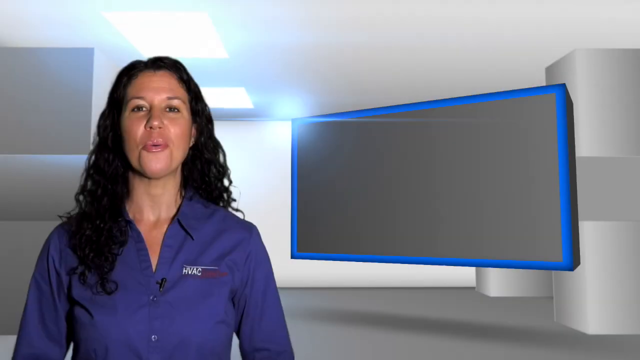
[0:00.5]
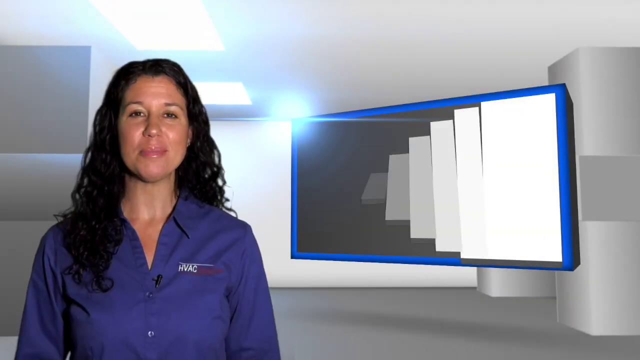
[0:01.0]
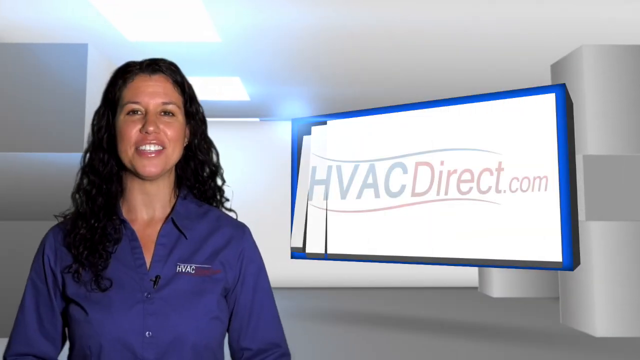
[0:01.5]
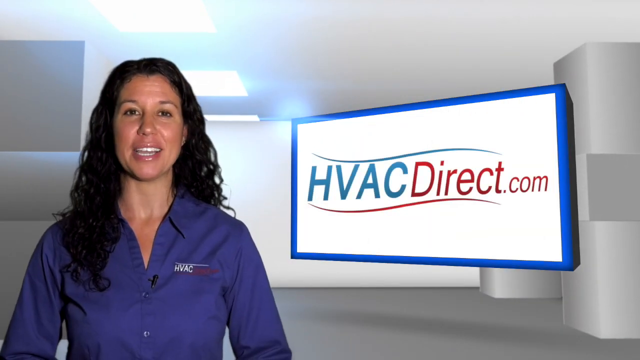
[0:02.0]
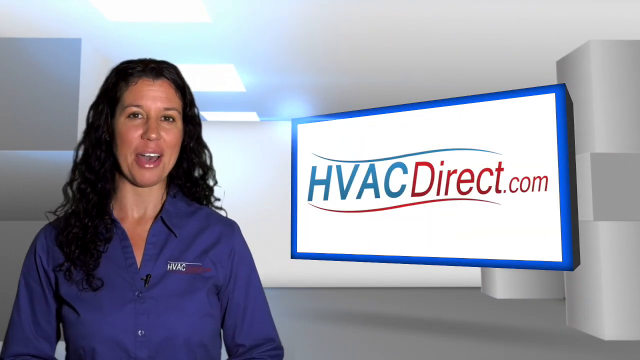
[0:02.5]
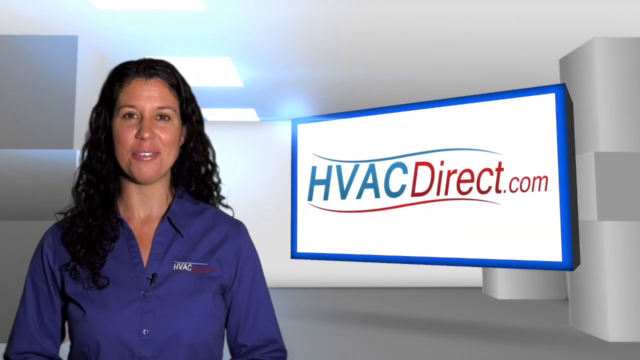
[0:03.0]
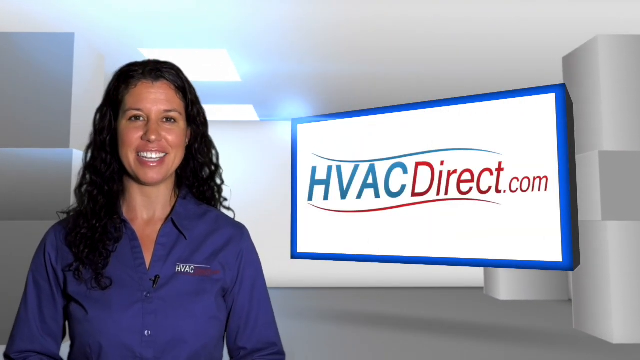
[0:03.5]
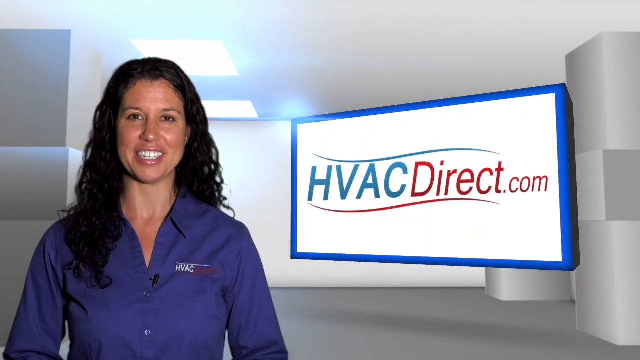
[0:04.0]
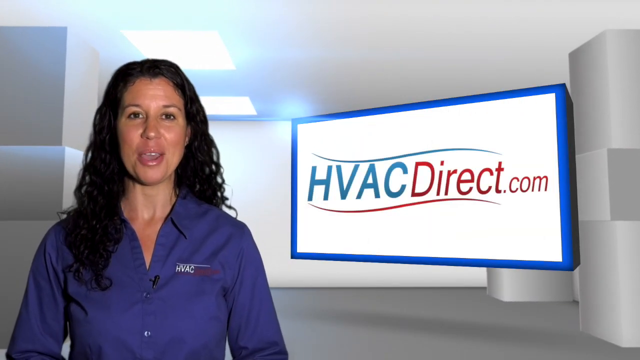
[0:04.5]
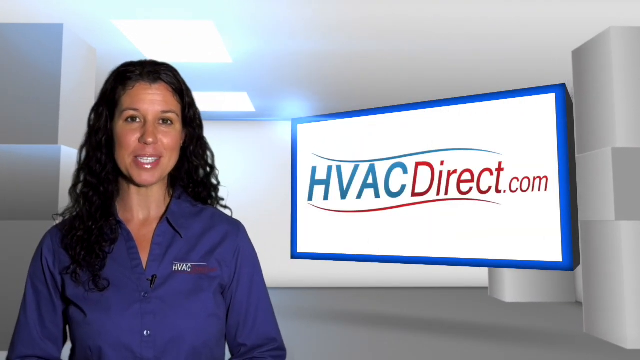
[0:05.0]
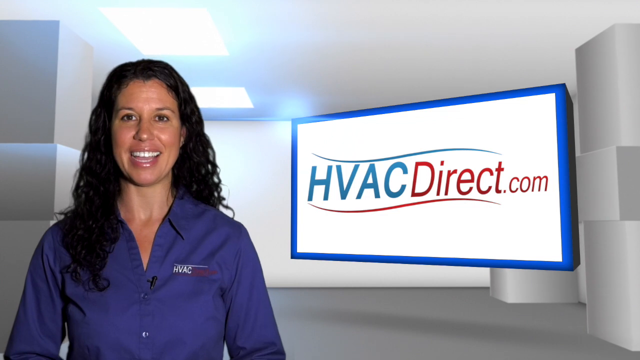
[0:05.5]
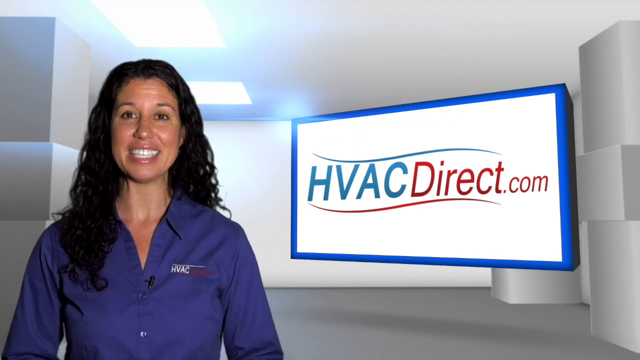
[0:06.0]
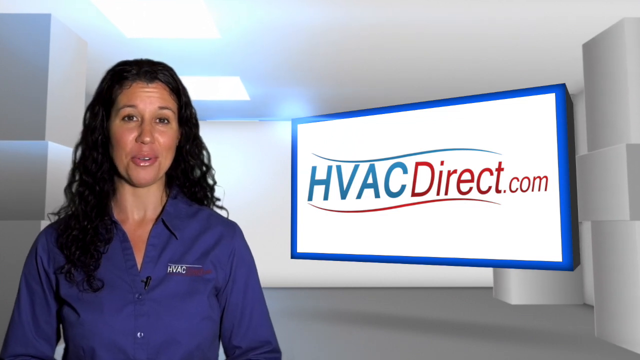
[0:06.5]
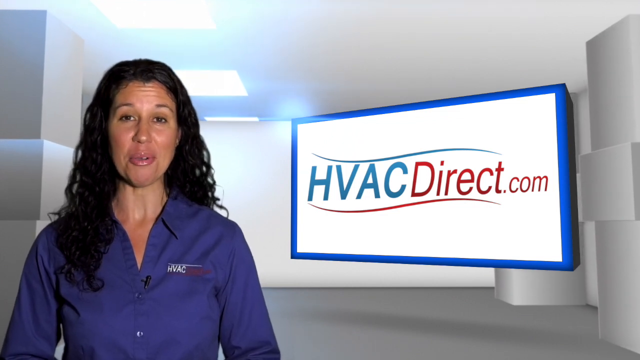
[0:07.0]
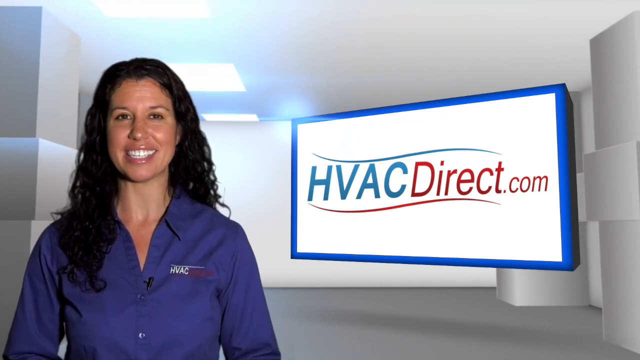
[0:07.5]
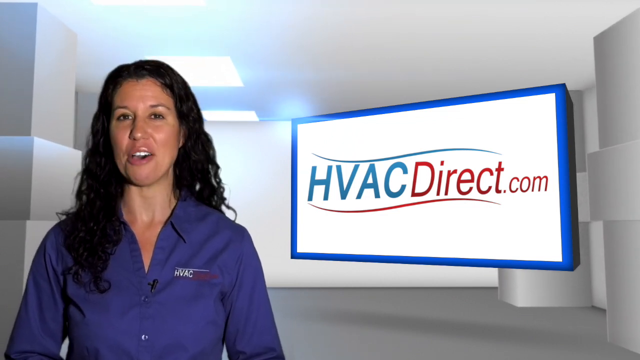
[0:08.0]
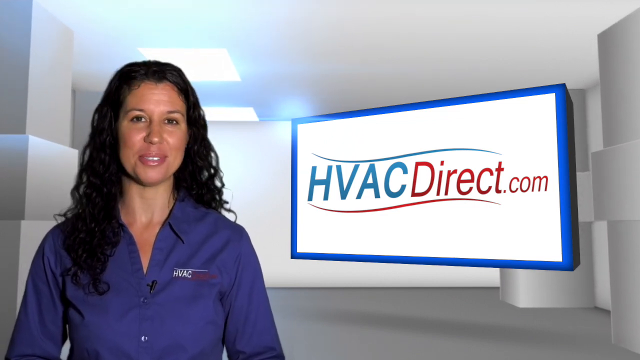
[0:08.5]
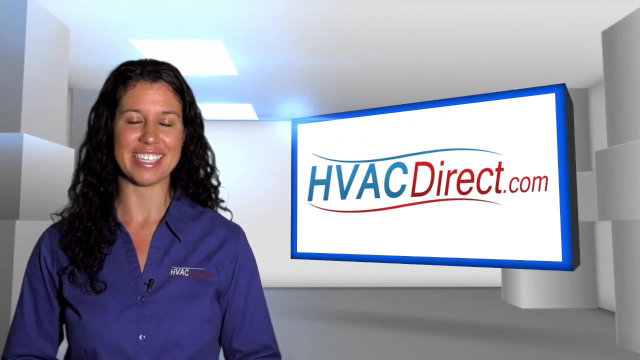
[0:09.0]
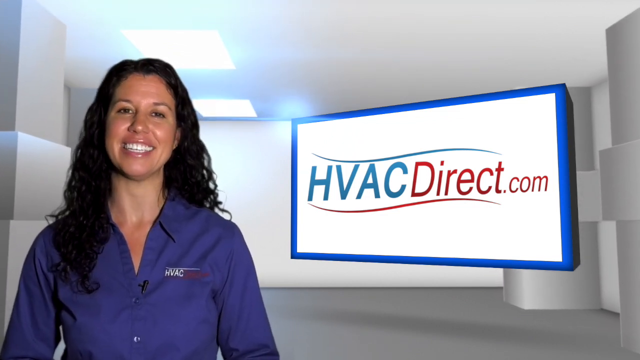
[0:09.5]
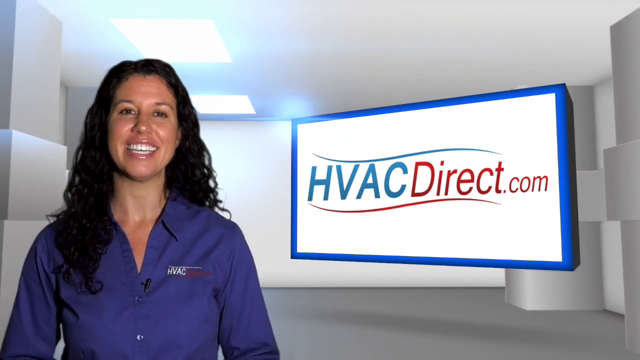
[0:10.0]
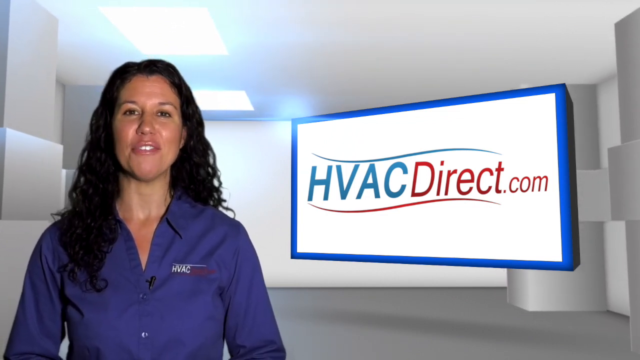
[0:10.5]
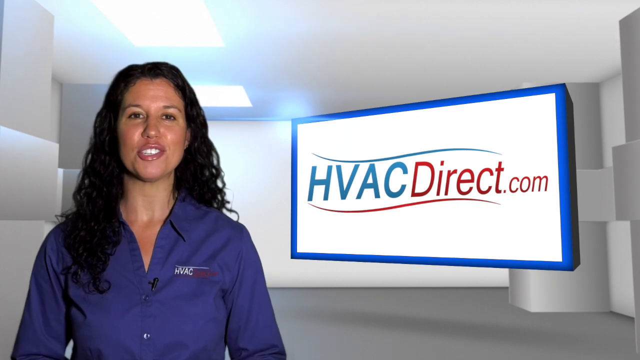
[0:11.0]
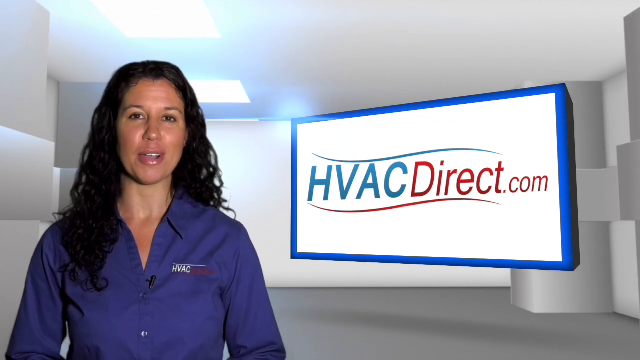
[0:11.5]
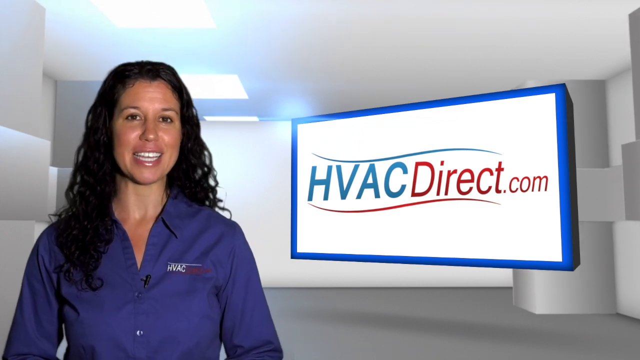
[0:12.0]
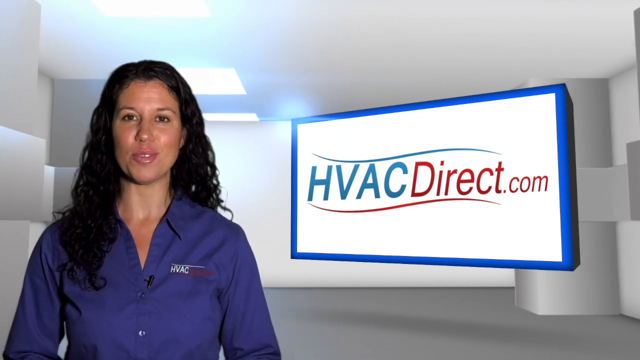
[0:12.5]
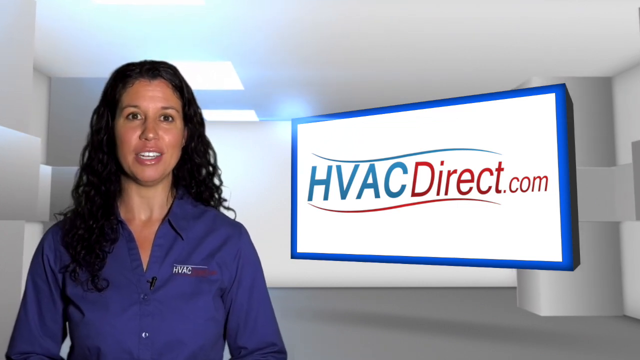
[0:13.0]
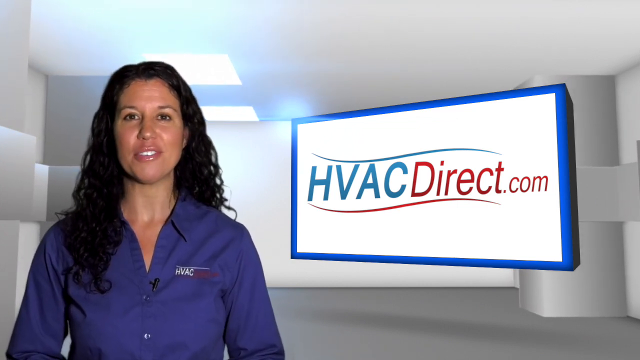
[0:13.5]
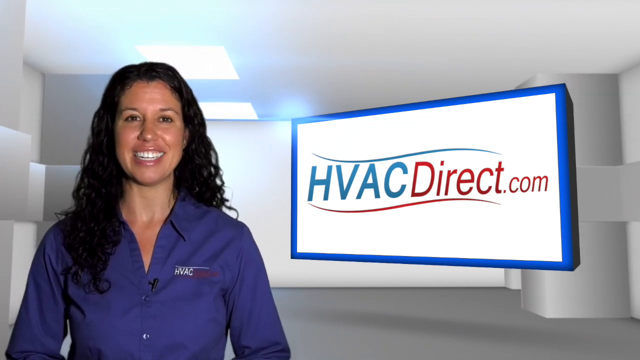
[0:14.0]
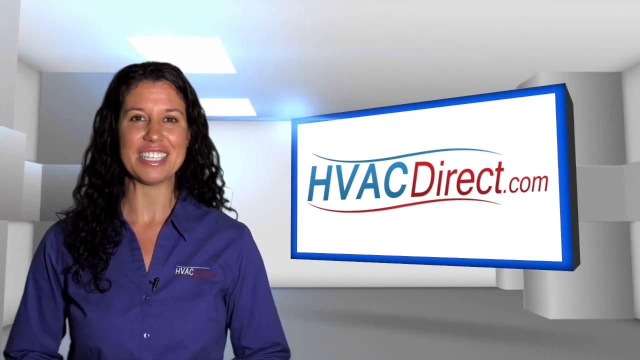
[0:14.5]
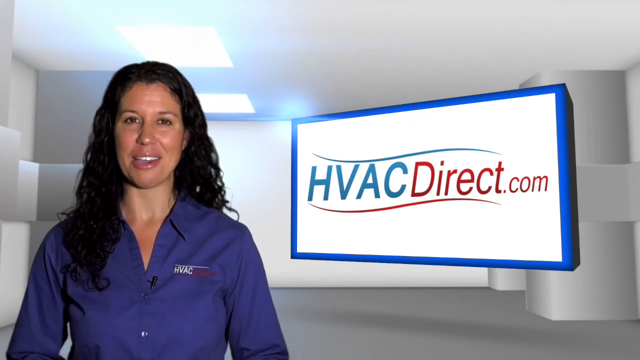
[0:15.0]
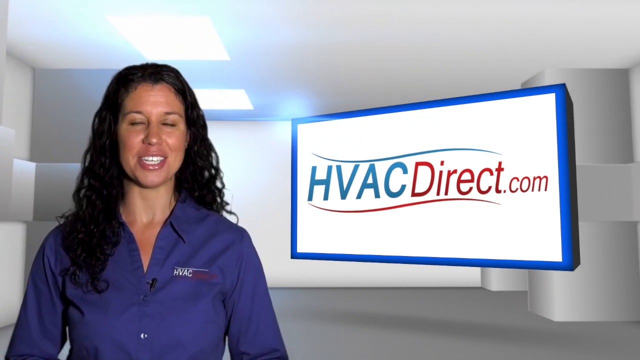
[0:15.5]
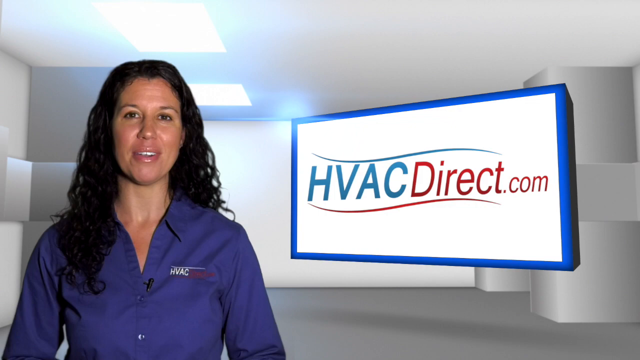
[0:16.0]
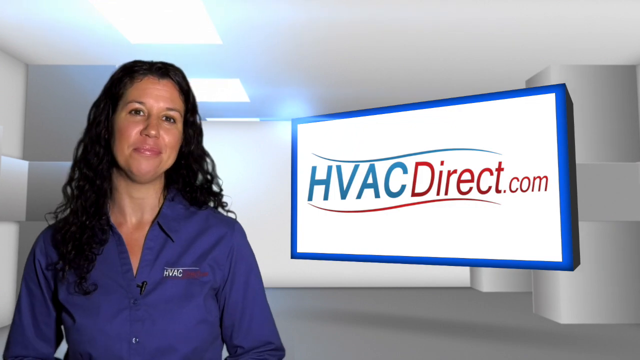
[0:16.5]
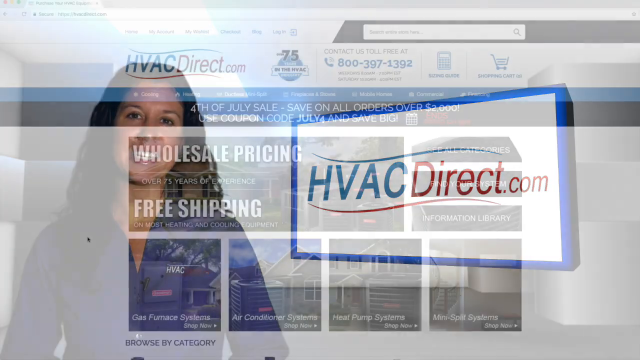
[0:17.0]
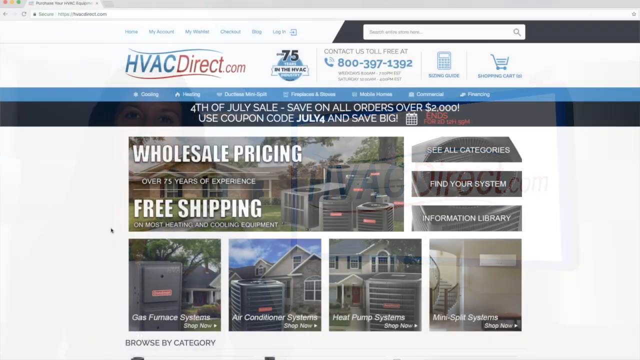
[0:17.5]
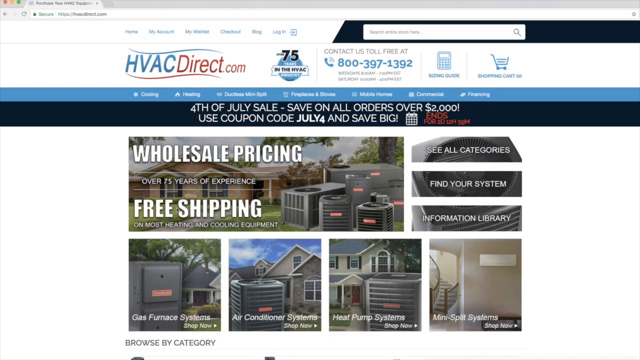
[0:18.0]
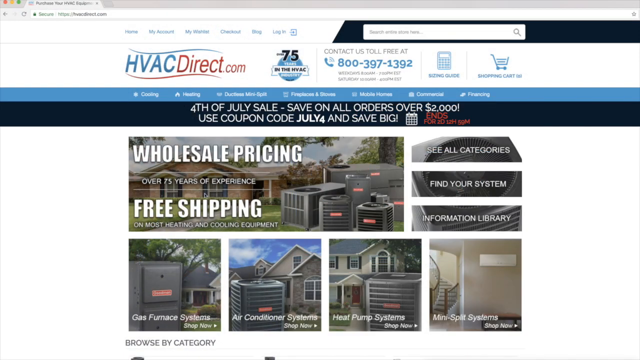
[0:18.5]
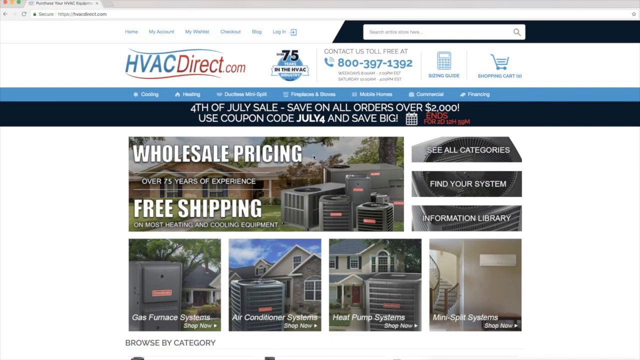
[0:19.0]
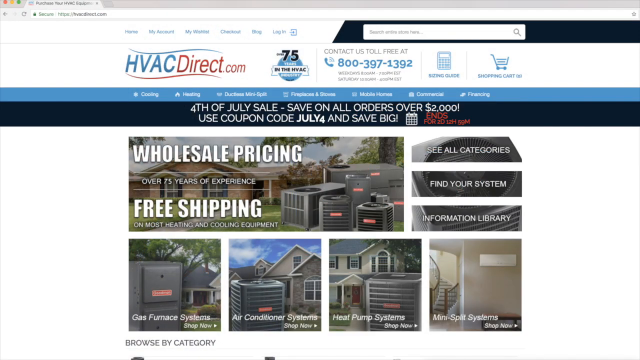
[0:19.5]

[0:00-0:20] A lady gives a presentation against a white background. She wears a blue top and has black hair. A big board shows "avac direct.com", and the screen shows text about "pricing and free shipping". The video is an advertisement, possibly for an investment, property or sales platform.